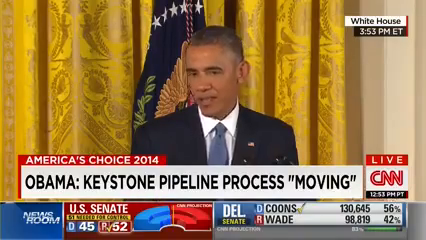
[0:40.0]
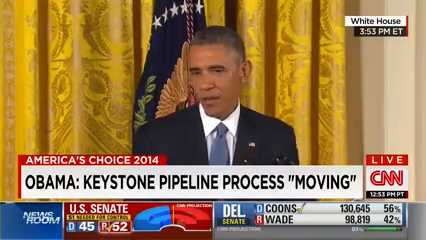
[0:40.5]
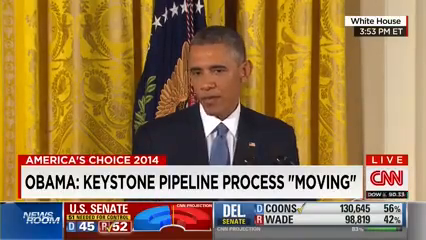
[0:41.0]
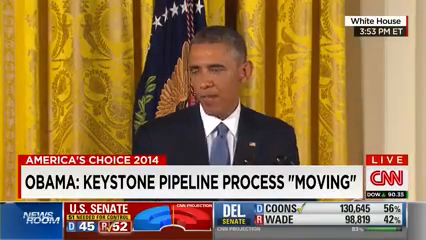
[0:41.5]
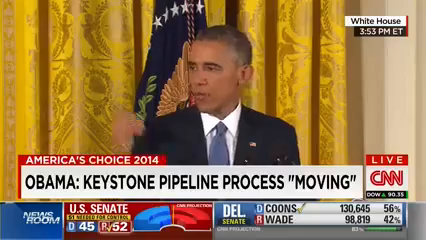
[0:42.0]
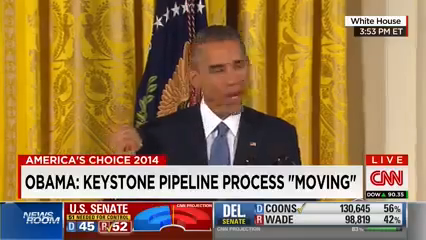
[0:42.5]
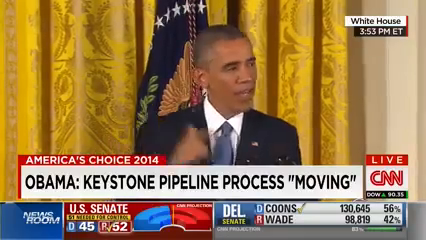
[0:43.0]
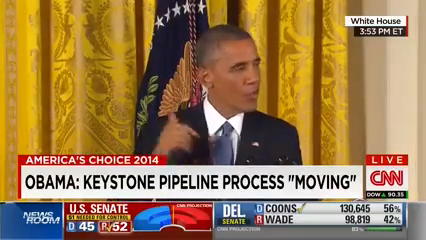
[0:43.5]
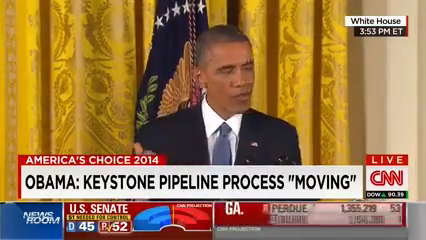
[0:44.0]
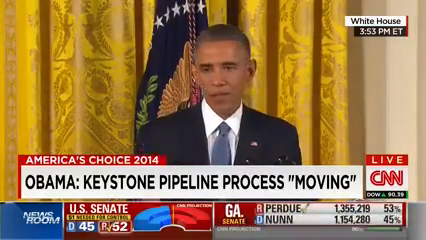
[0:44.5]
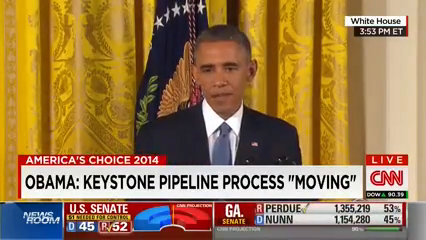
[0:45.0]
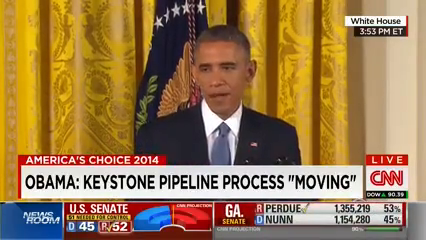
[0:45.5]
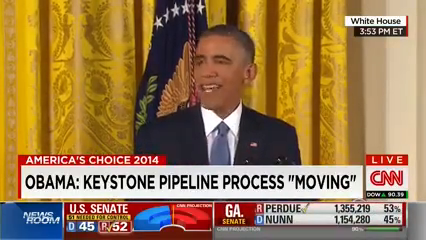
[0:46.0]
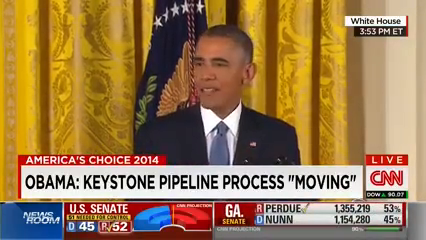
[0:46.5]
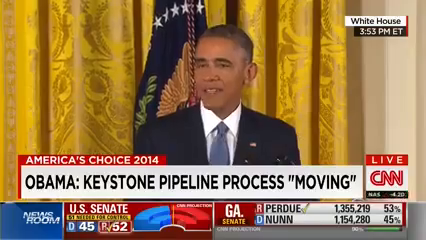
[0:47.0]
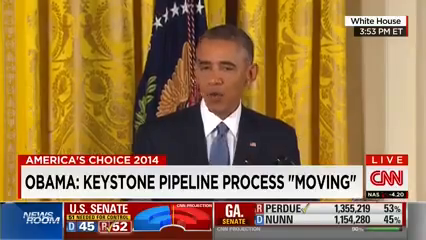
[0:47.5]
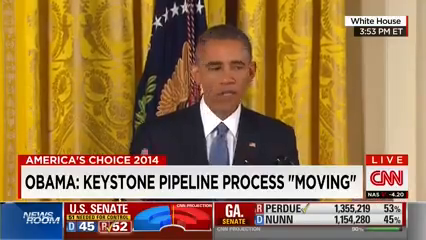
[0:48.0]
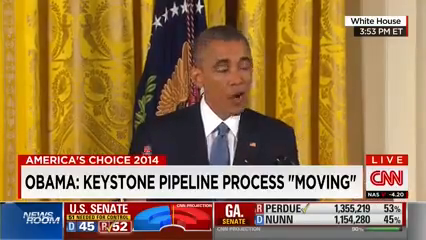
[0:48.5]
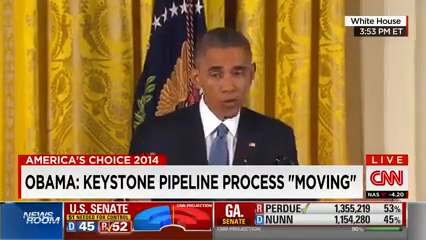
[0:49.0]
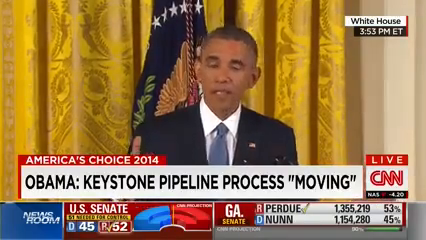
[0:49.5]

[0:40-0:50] Former President Obama keeps speaking; it is not a question-and-answer session, and he seems to be delivering a continuous speech. He points backwards and forwards and looks less to the left and right, focusing more toward the middle. He opens his mouth slightly as he speaks. The yellow and gold curtain is behind him along with the flag, which is now more clearly visible: it is navy with white stars and does not seem to be the U.S. flag. It has green leaves and seems to have golden feathers, maybe representing a bird.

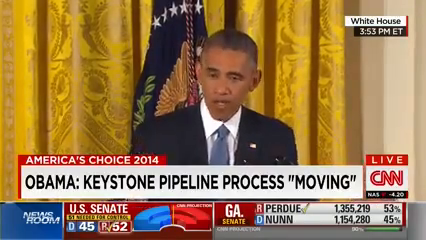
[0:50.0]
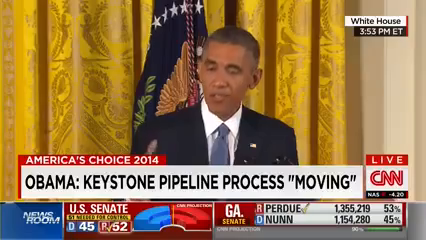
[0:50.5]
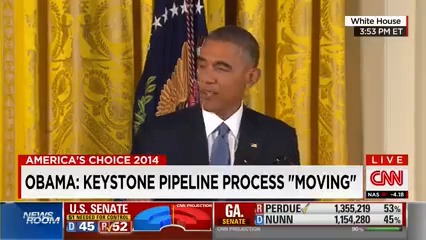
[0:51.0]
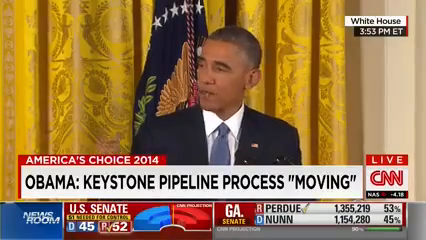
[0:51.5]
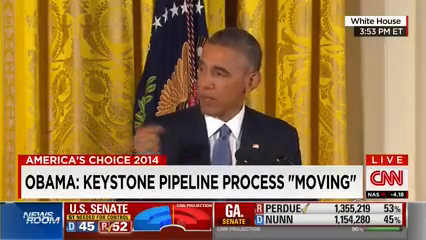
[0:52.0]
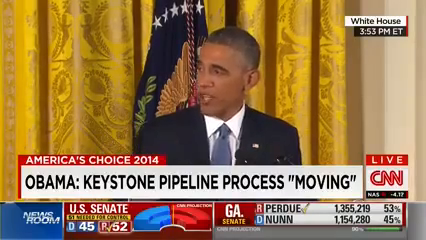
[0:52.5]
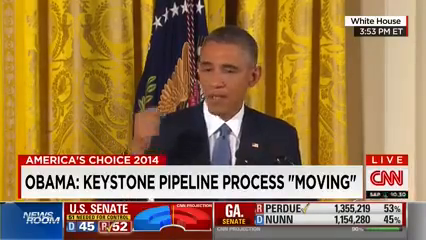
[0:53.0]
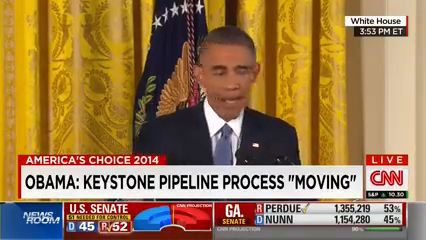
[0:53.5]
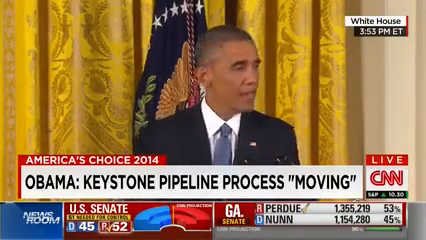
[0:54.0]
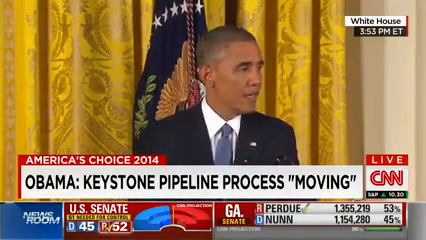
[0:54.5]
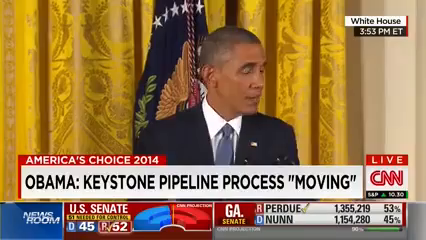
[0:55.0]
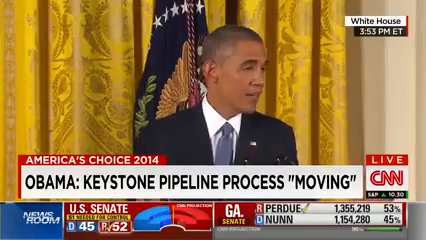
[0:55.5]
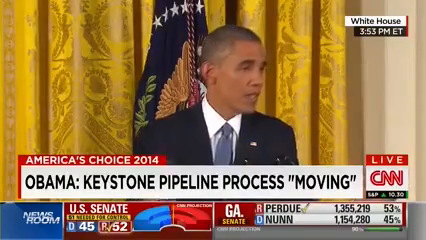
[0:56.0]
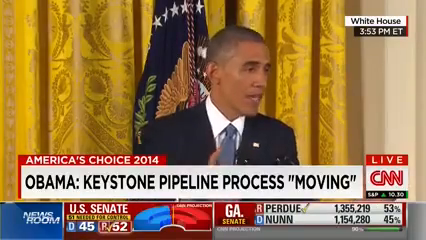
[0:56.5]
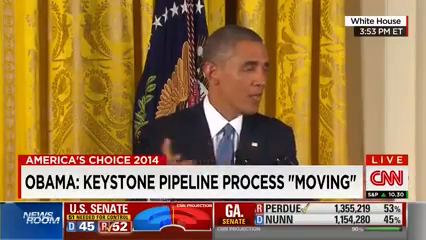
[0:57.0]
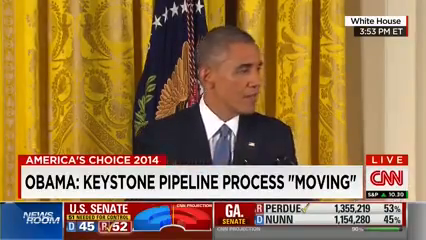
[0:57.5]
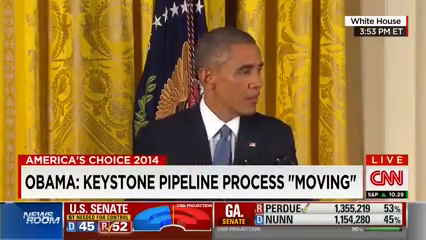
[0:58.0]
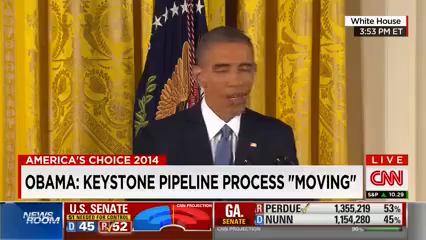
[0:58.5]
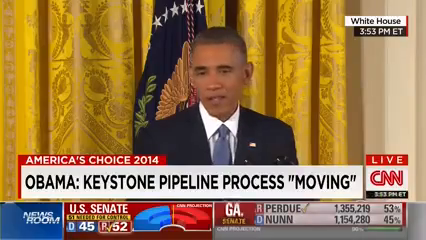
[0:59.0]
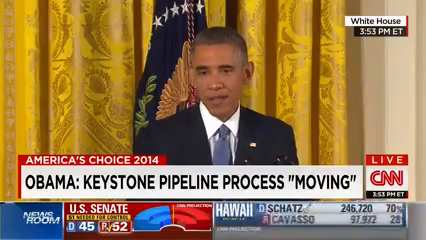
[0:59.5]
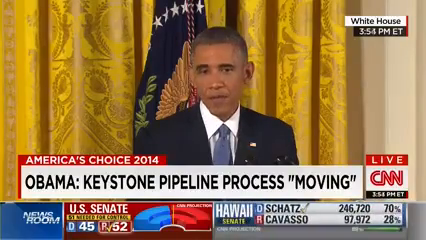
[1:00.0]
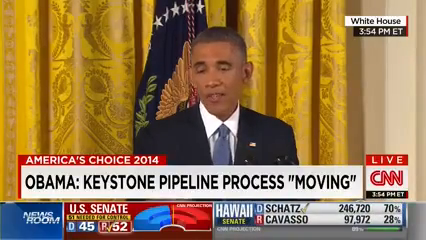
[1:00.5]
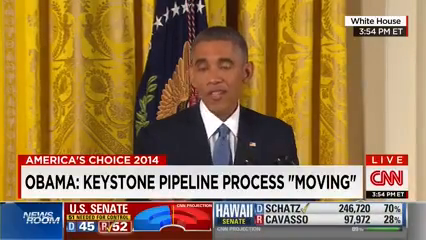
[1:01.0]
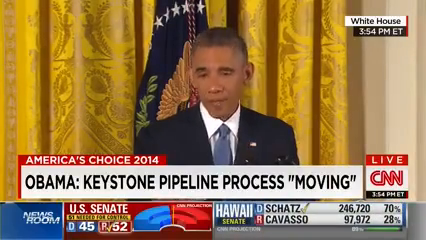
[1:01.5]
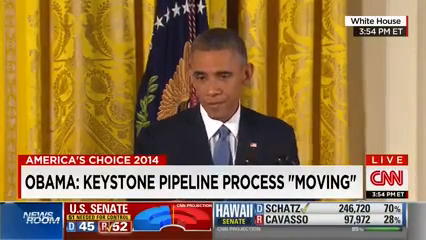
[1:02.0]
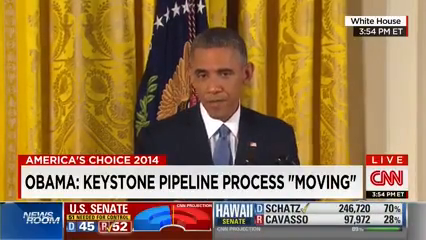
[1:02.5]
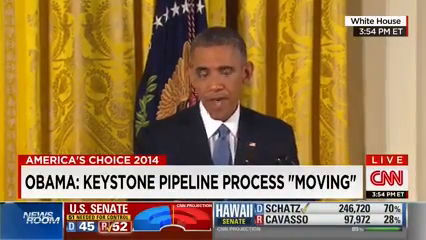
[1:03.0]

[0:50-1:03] Former President Obama continues speaking, now with more animated hand gestures, moving his right hand forward and backward and pointing to convey emotion. The bottom right of the screen changes from Georgia to Hawaii. It shows "Hawaii" with the statistics for that race between Schatz and Cavazzo: Schatz at 246,720 votes and the other at about 97,972 votes.